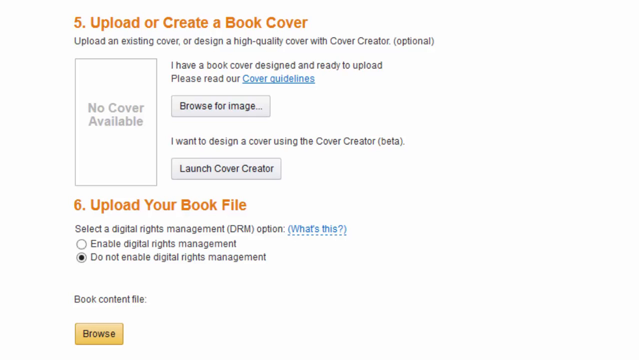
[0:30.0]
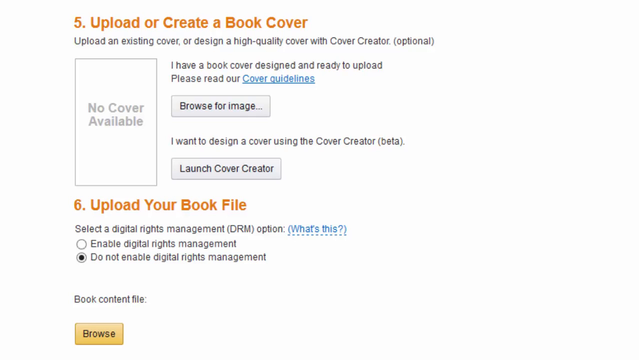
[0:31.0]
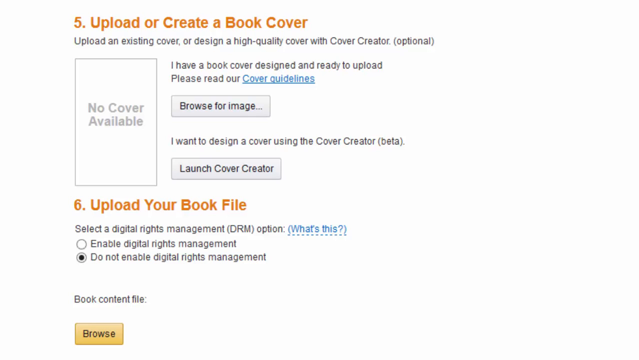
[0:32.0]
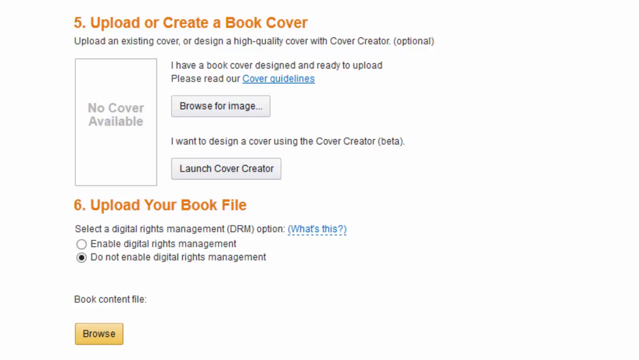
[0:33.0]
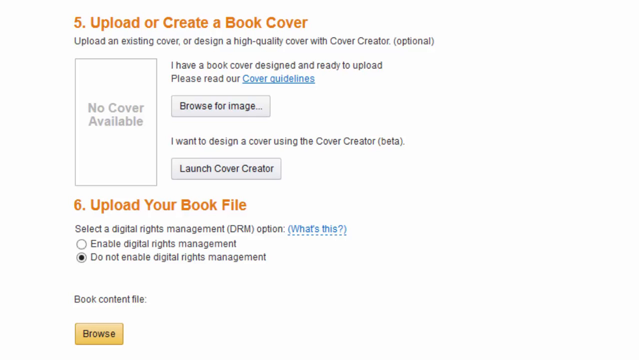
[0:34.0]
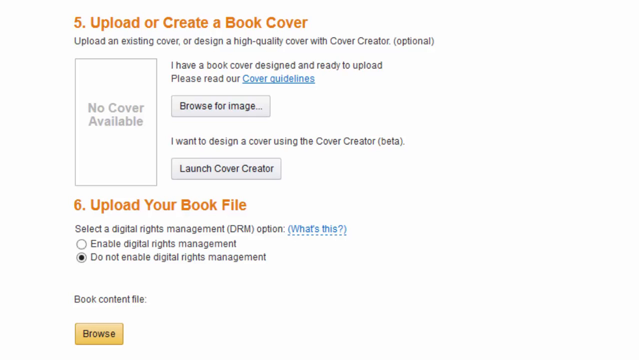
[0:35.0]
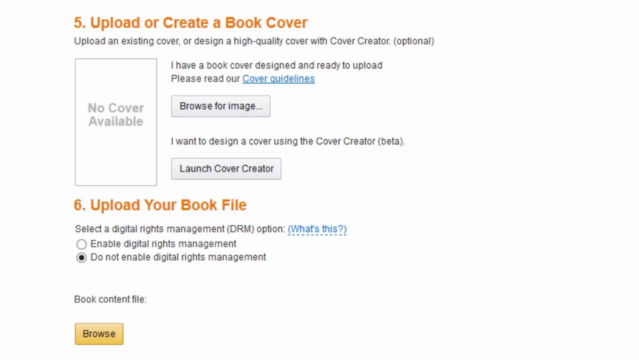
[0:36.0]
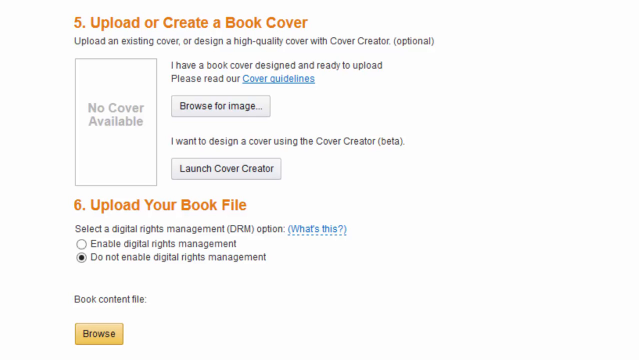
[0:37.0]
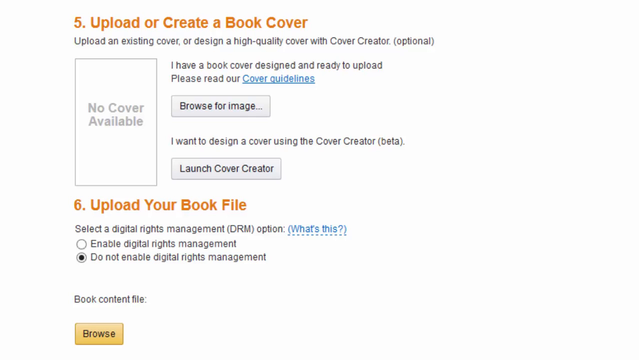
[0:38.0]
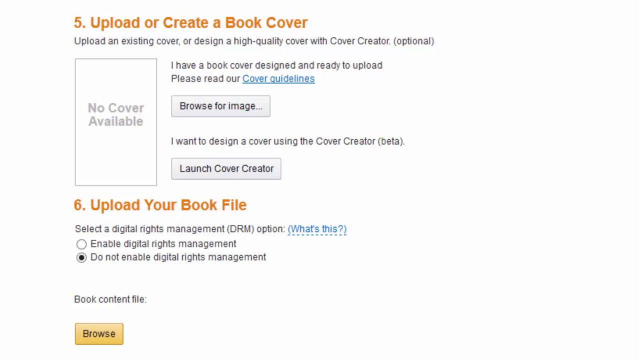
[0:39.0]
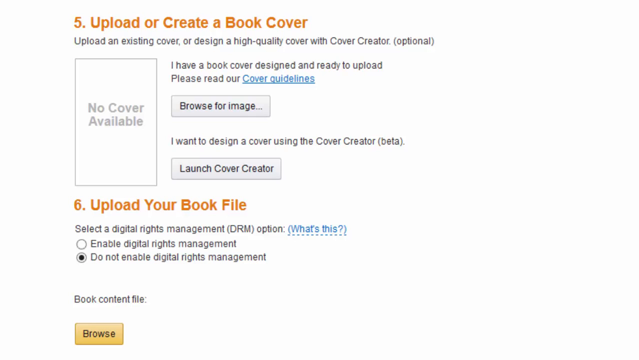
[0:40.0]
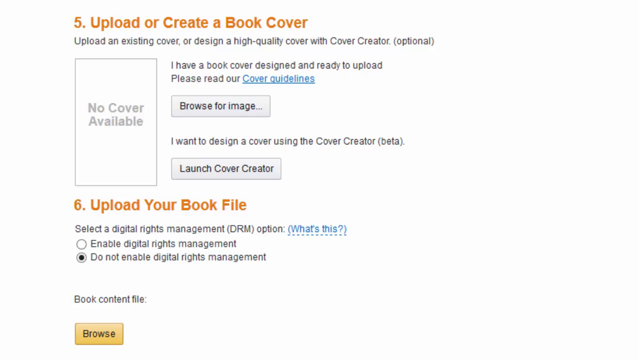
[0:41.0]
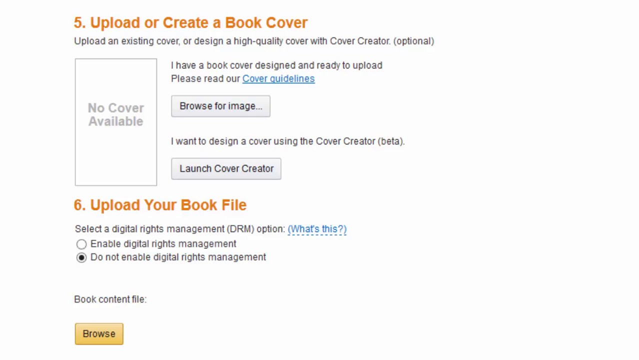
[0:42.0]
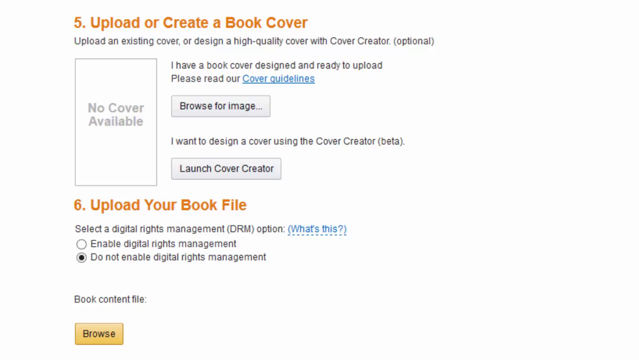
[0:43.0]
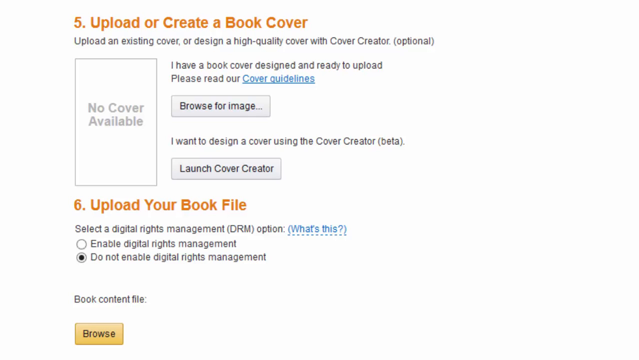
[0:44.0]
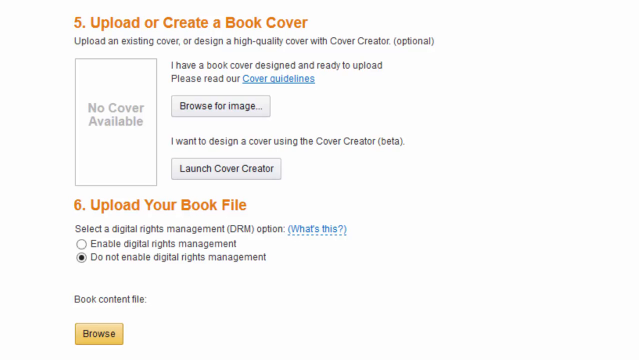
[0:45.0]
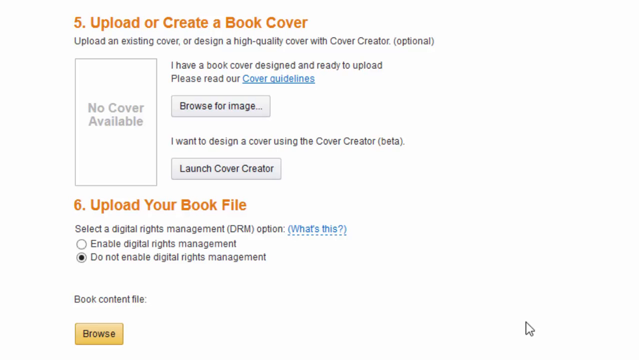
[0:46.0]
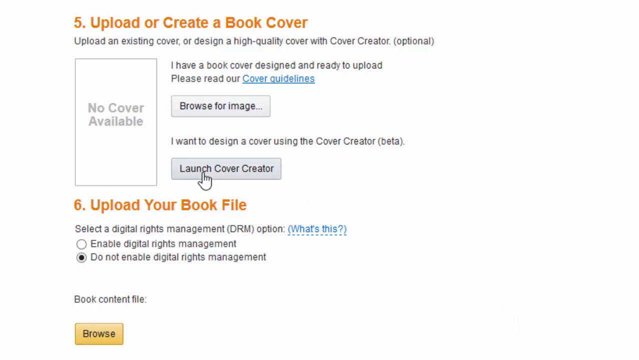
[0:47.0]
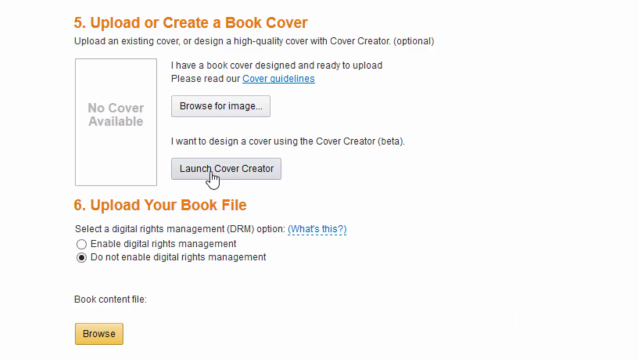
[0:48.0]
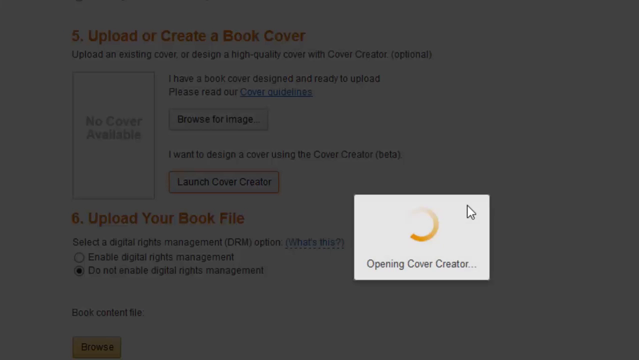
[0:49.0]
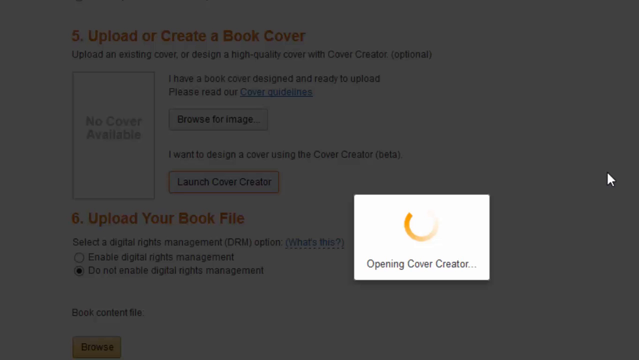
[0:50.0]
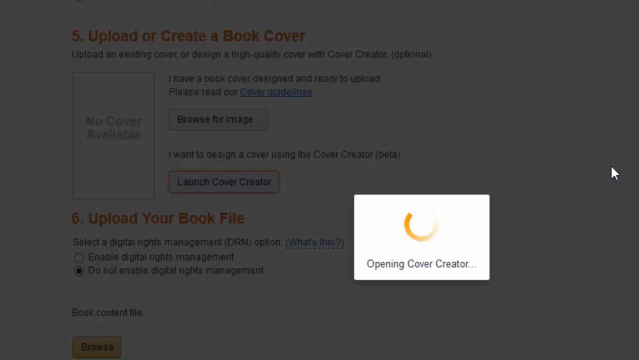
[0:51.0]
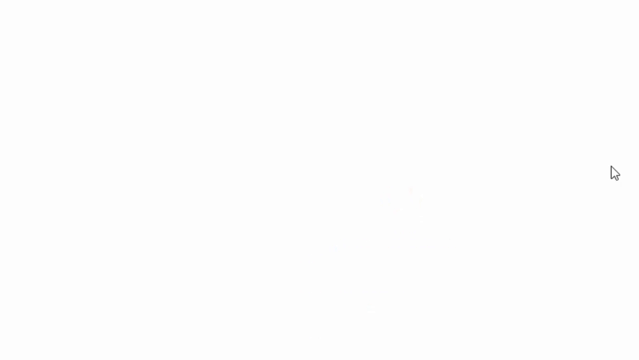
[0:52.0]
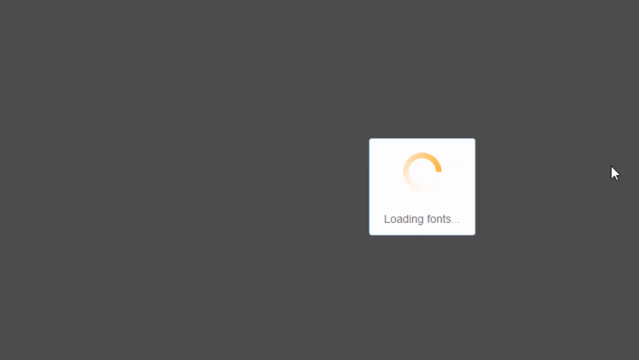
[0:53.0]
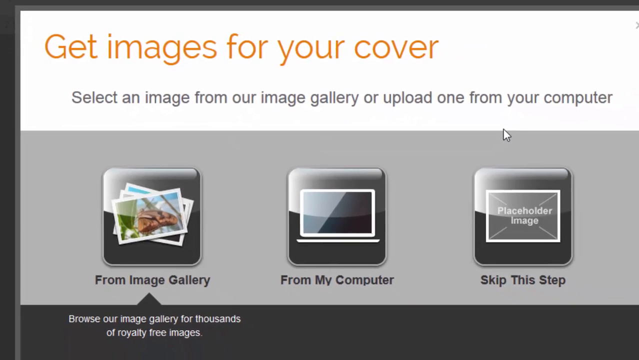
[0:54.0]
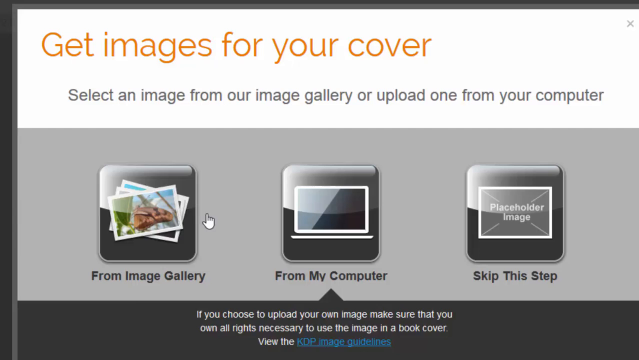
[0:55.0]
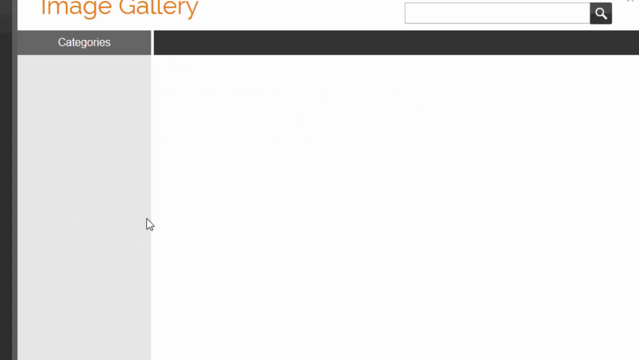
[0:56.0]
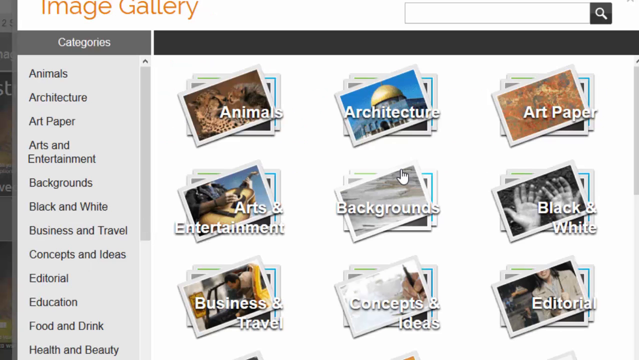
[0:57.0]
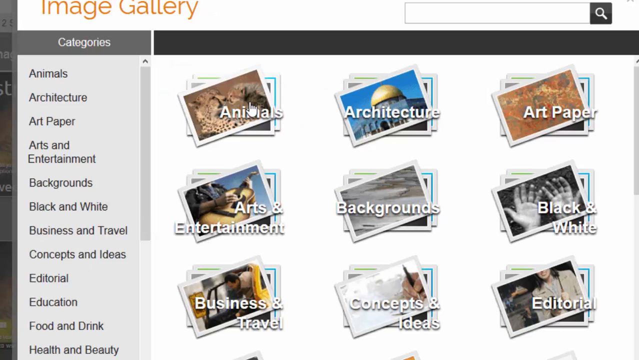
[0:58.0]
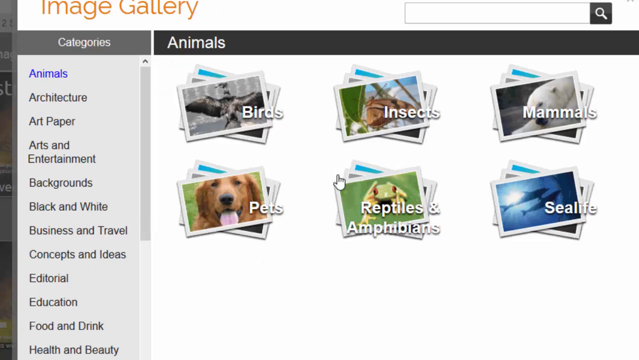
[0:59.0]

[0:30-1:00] For about the first 15 seconds, the same static text page of instructions for creating a book online is shown, with number five, "upload or create a book cover", and number six, "upload your book file". Then a pointer arrow comes in from the bottom right corner of the screen, moves up and hovers over the "launch cover creator" button, turning into a pointer finger icon, and clicks it. On the right-hand side of the page toward the bottom, a small rectangular window pops up reading "opening cover creator" with a spinning circular icon animation. It goes away, the text page in the background goes away, and the whole screen turns gray. A white rectangular square shape with the same animated spinner appears for a second or two, reading "loading fonts". Another window then slides in from the bottom right to cover the whole screen. This page has a white banner at the top with orange text reading "get images for your cover" and below it a dark gray line reading "select an image from our image gallery or upload one from your computer". Below that, a gray banner takes up most of the screen, with three square icons arranged equidistant from each other in the middle. The left icon says "from image gallery" and has a white background with digital representations of stacked photographs in its center. The middle icon says "from my computer" and has a black background with a computer monitor icon. The right icon also has a black background and says "skip this step", with a rectangle in its middle reading "placeholder image". The middle and right icons have a kind of glare-type shading at the top that makes them appear glossy; the left icon has that sort of glare too, but it is very hard to see because it is white on white. This is shown for just a second before switching to another page; it appears the "from image gallery" icon was clicked. The new page is blank for a second, then "image gallery" appears in orange at the very top, with a black bar across. On the left is a list of categories, and on the right are icons for those categories that look like stacks of photographs, like on the previous page: animals, architecture, art paper, arts and entertainment, backgrounds, black and white, business, concepts and ideas, and editorial. The top photograph of each stack shows a representative image of the category: for animals it appears to be a mama leopard and a baby leopard, architecture shows a building, art paper shows graphic art, arts and entertainment looks like it could be a scene from a movie, backgrounds is just a black or gray background, and black and white is a black and white image of a person's pair of hands. The pointer goes up to animals and clicks on it, and another set of stacked-photograph icons appears: birds, insects, mammals, pets, reptiles and amphibians, and sea life. The top photographs show a dog for pets, a frog for reptiles and amphibians, a bird for birds, a polar bear for mammals, porpoises for sea life, and what looks like a moth for insects.